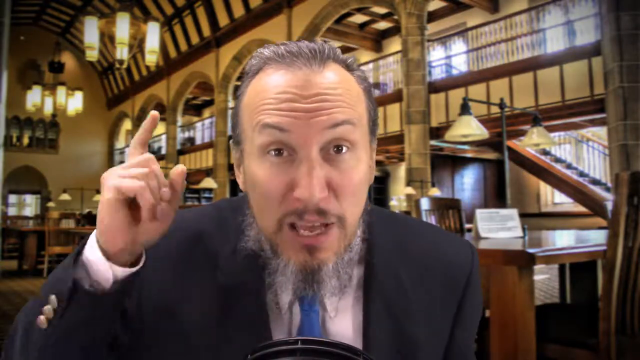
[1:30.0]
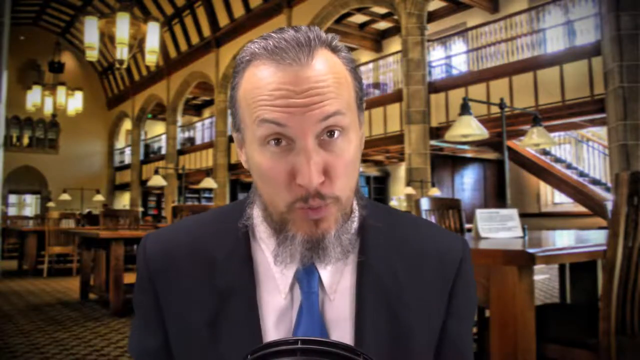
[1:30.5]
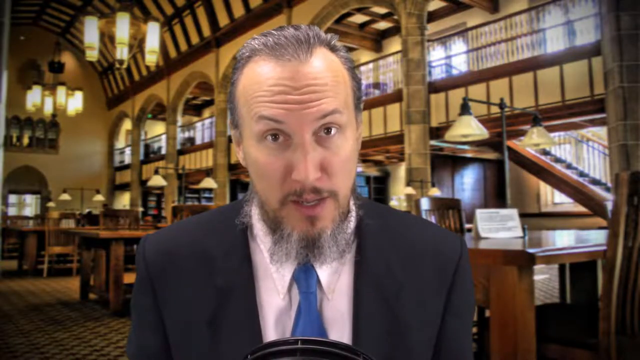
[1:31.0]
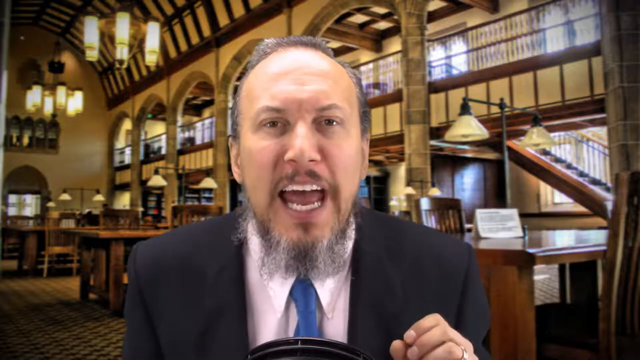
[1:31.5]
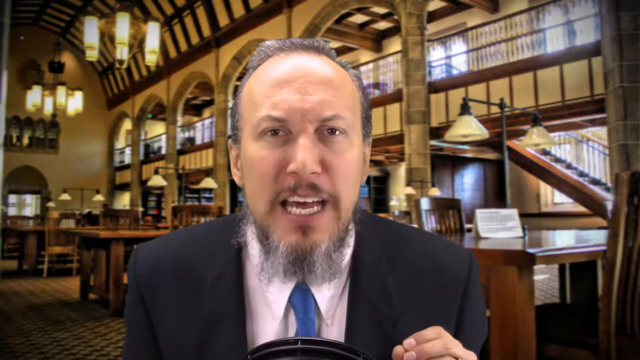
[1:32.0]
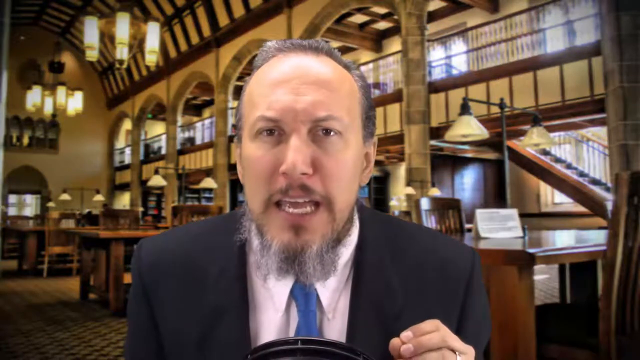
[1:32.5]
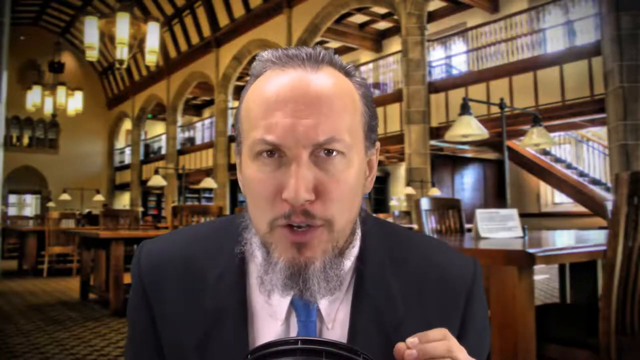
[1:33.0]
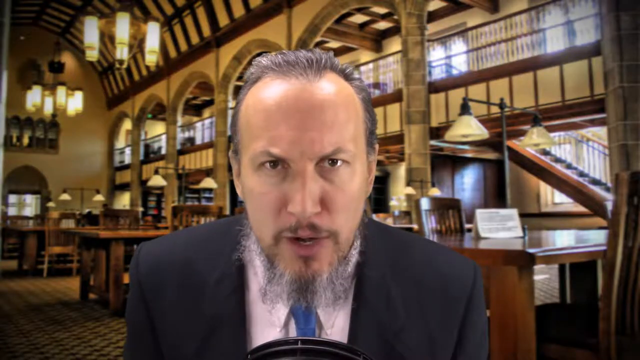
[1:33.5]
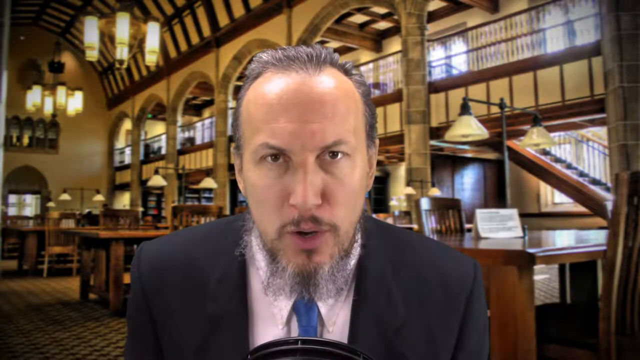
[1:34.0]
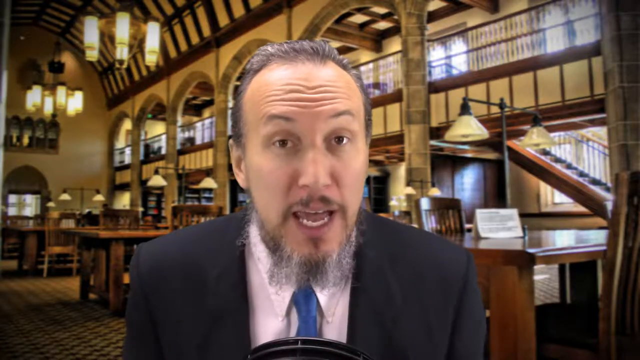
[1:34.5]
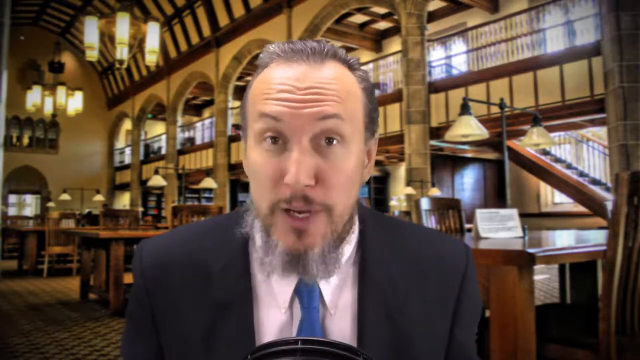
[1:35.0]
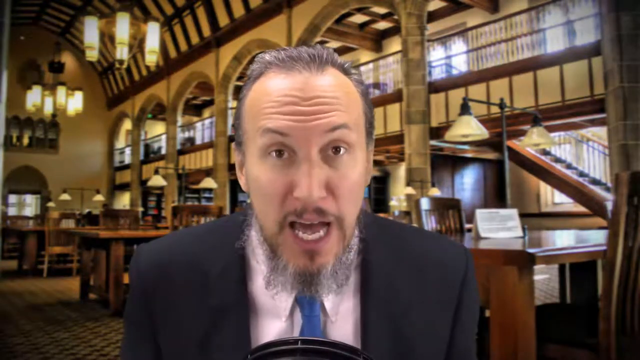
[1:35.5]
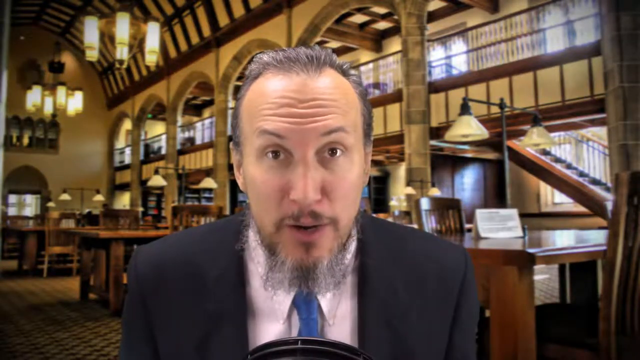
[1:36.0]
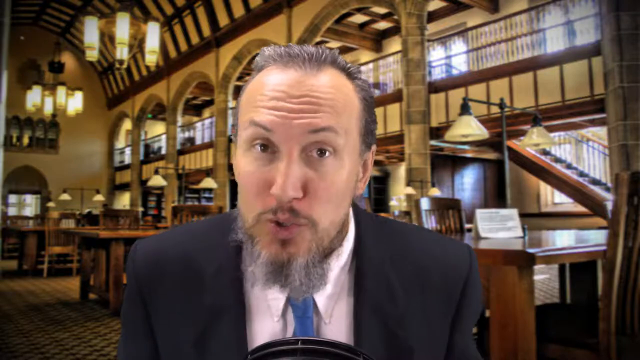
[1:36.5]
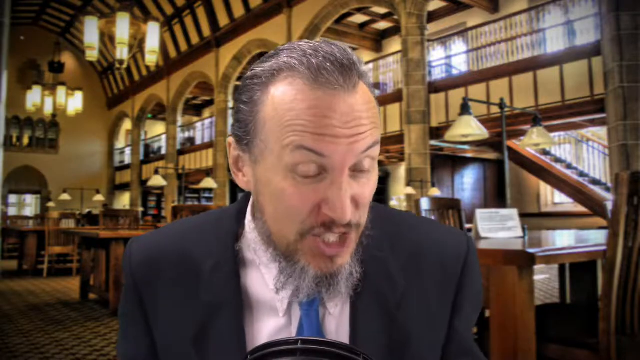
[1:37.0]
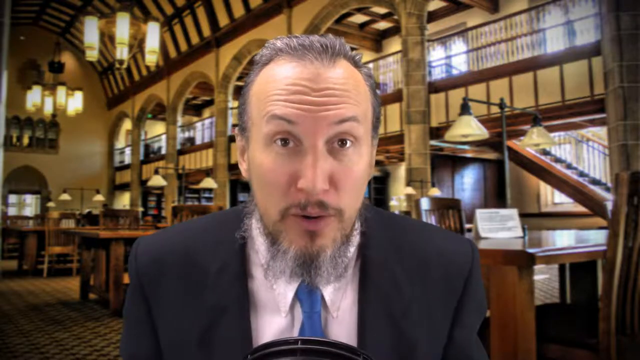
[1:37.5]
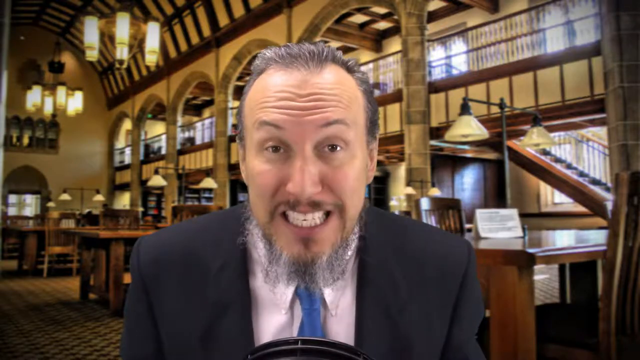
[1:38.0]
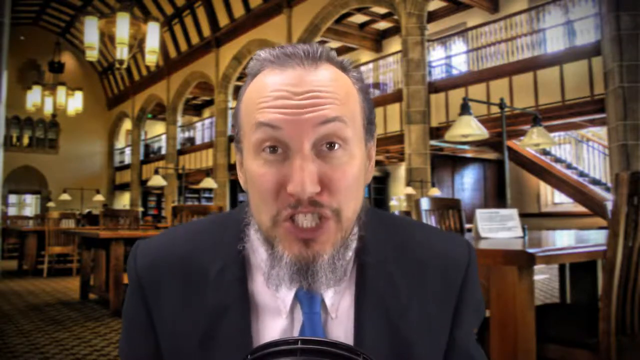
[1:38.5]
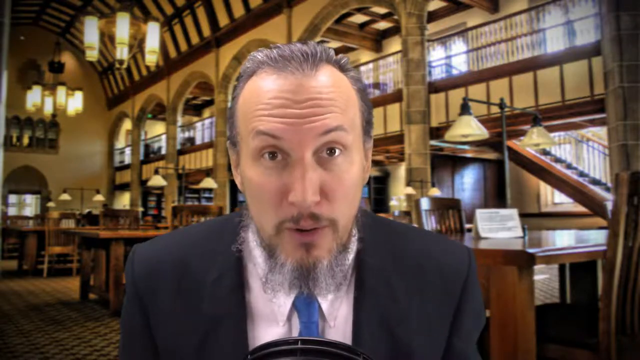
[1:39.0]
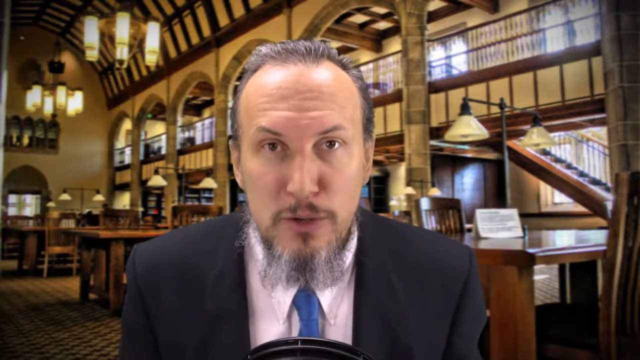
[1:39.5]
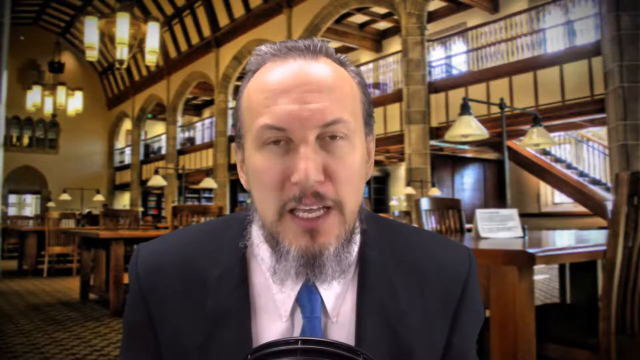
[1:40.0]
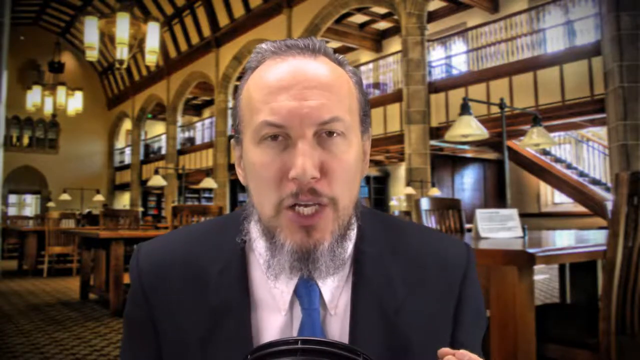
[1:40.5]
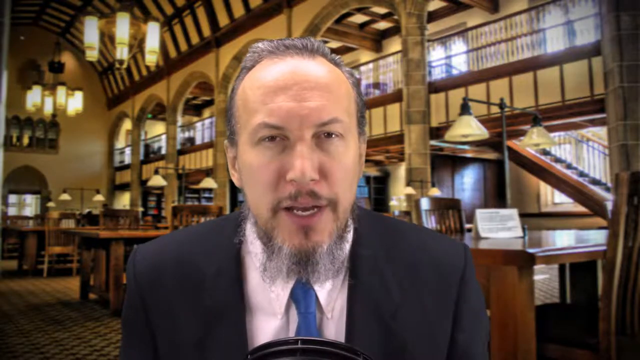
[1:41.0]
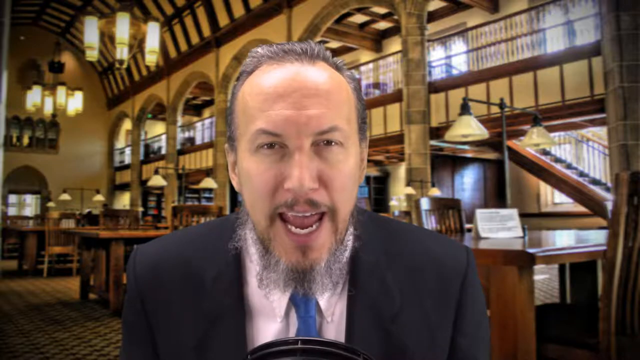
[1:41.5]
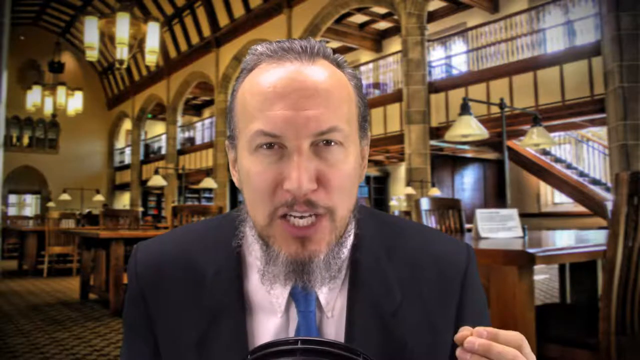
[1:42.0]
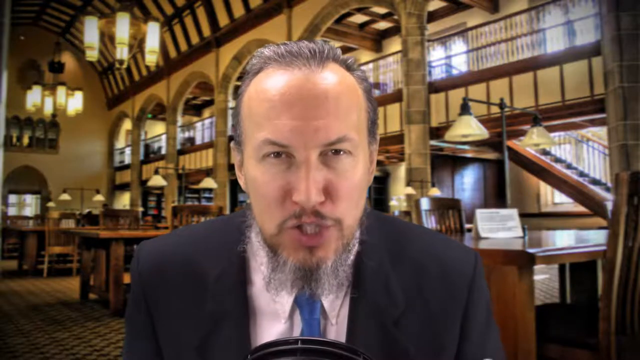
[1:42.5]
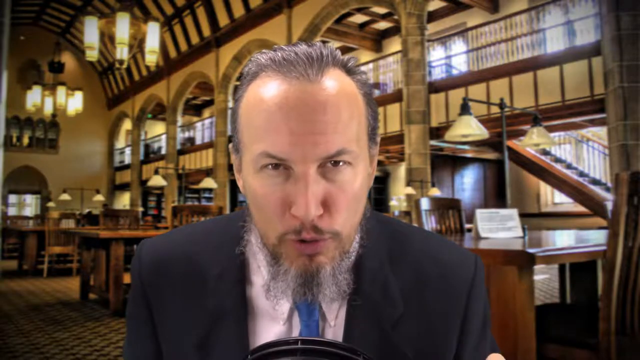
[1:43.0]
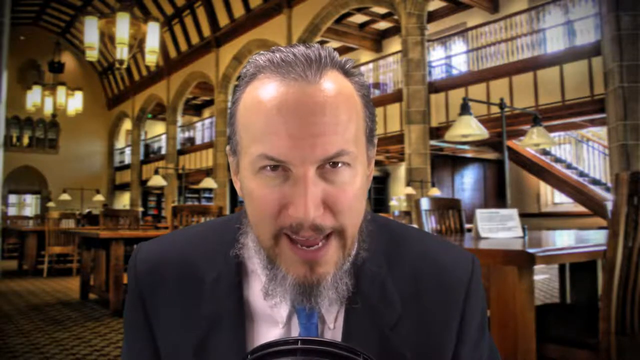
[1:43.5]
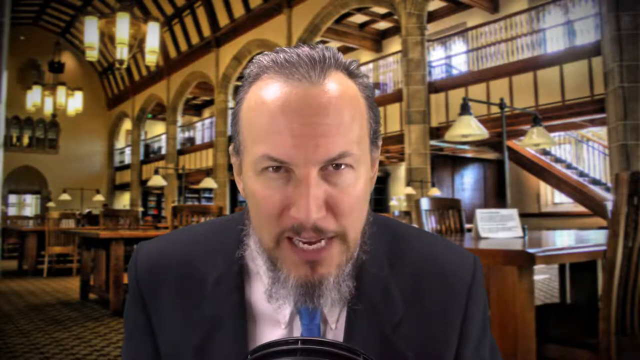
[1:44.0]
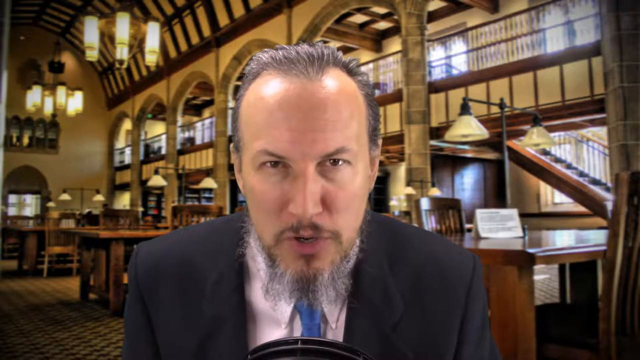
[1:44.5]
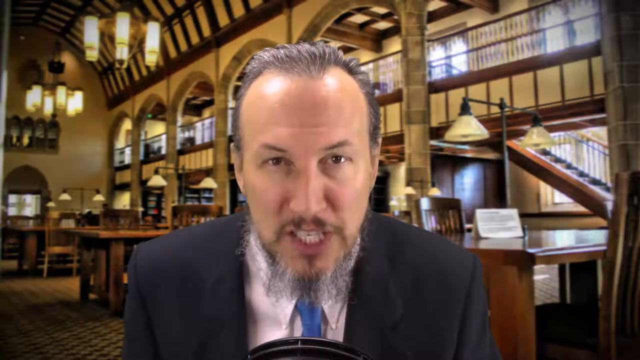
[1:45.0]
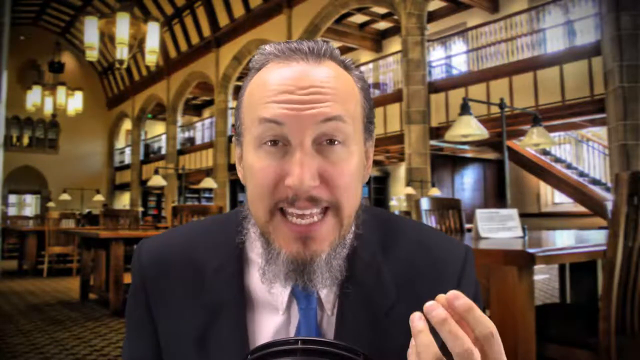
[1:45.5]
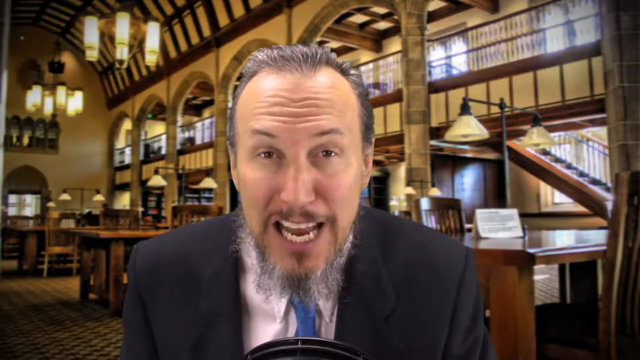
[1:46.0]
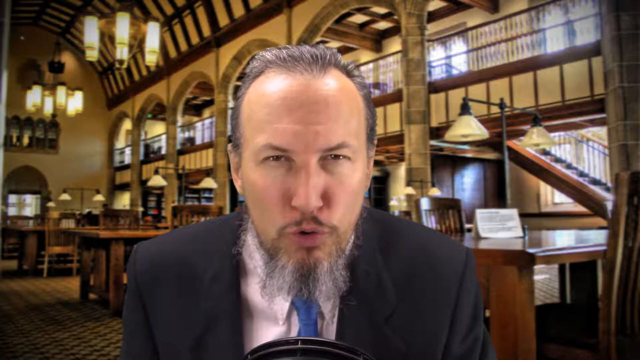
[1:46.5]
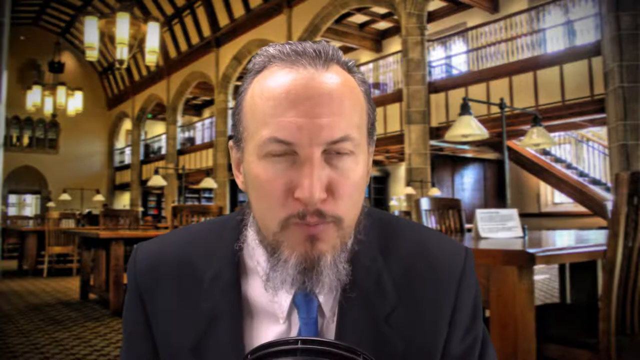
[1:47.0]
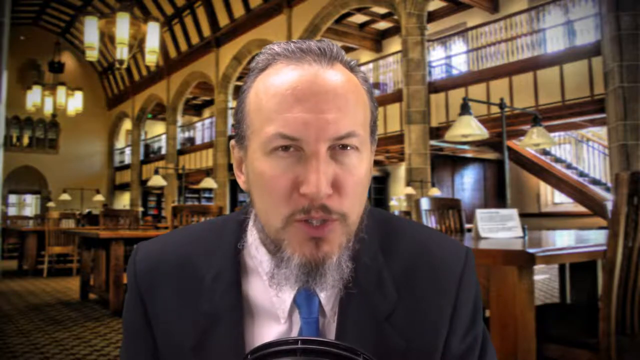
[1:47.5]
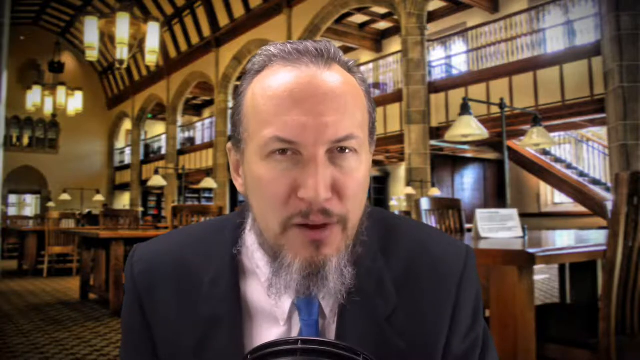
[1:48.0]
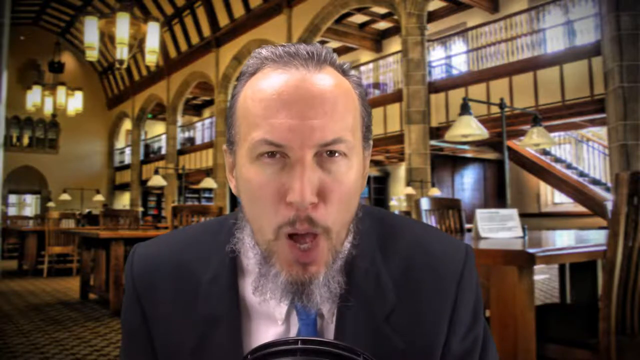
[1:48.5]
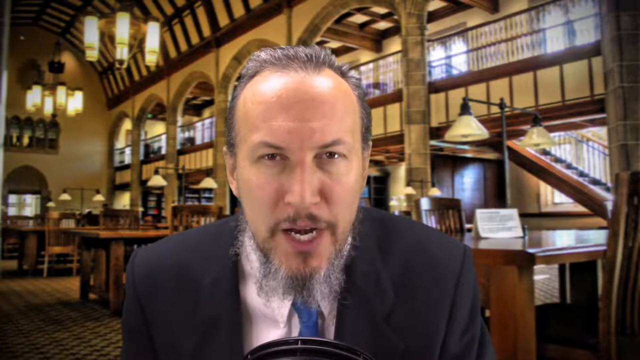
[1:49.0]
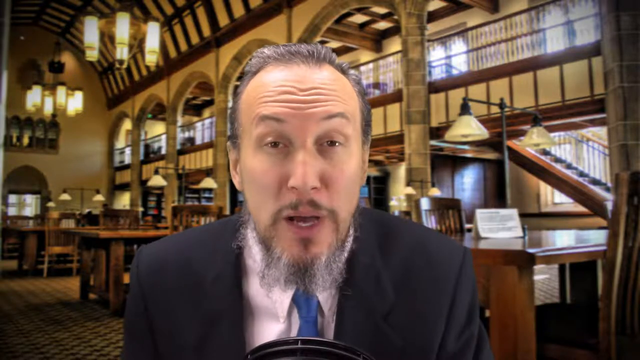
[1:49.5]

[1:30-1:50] In a very prestigious-looking library with two floors, a man is seen close up from the shoulders up. He is fair-skinned, with brown slicked-back hair, a rather scraggly salt-and-pepper beard and a goatee and mustache, and is dressed in a suit and tie. He raises his right hand with his index finger pointing upward toward the sky and speaks passionately, using his hands with somewhat aggressive motions. He scrunches his face intently as he leans toward the camera; his eyebrows draw inward as he lowers his head, with serious changes of expression. His head moves slightly left to right, and he almost bares his teeth as he looks off to the lower left, moving his left hand up and down. He seems to really want to stress his point.